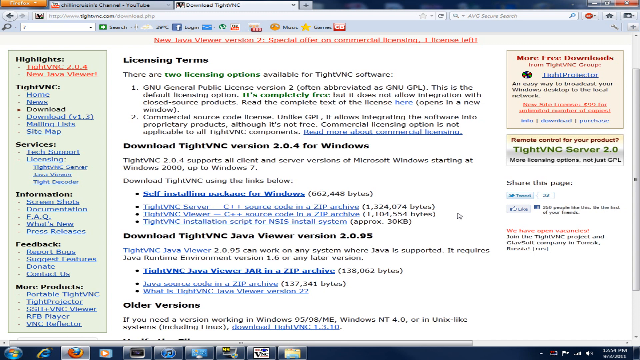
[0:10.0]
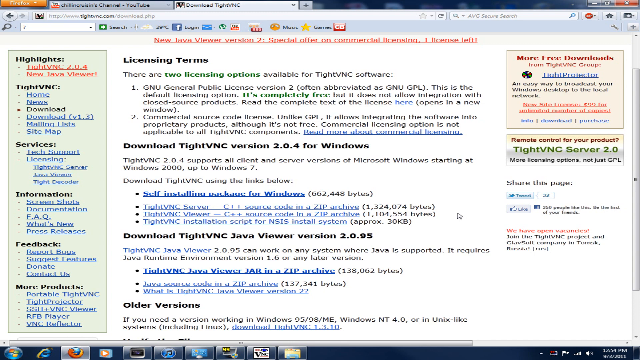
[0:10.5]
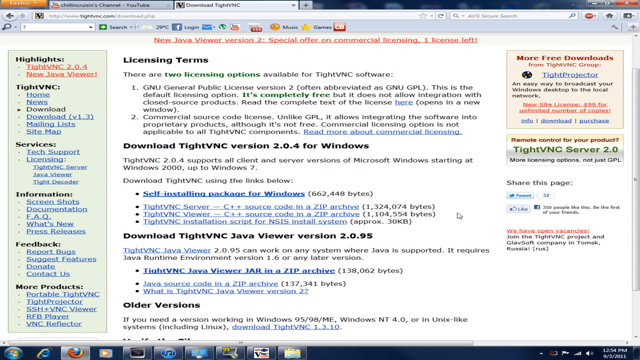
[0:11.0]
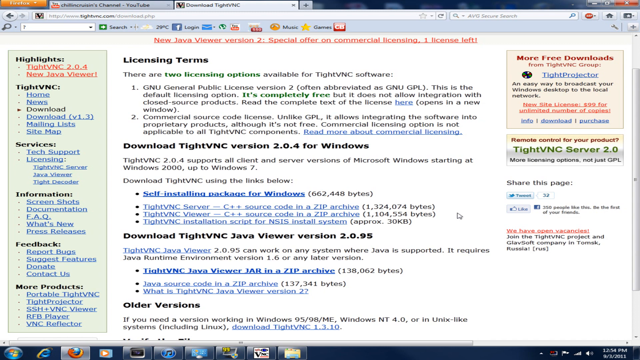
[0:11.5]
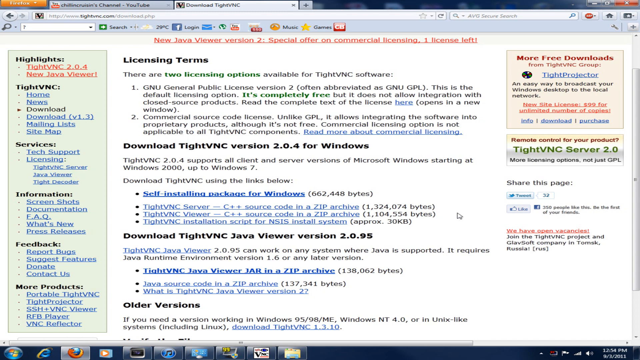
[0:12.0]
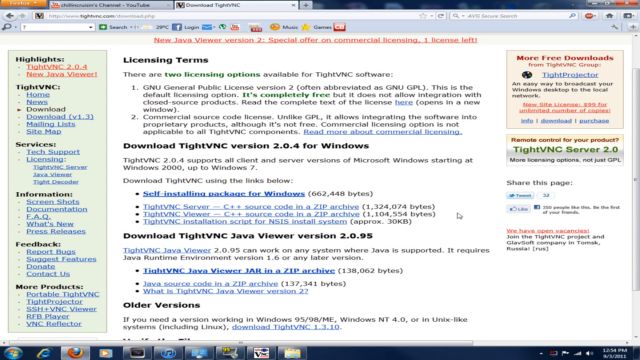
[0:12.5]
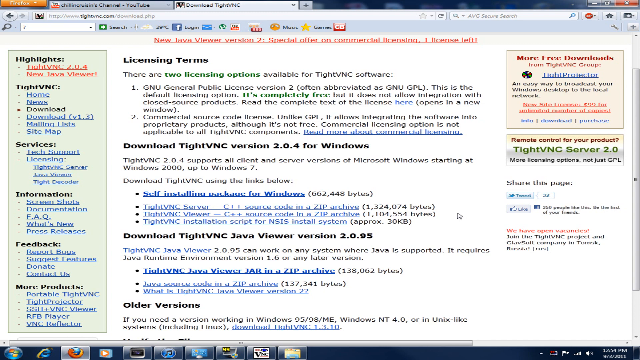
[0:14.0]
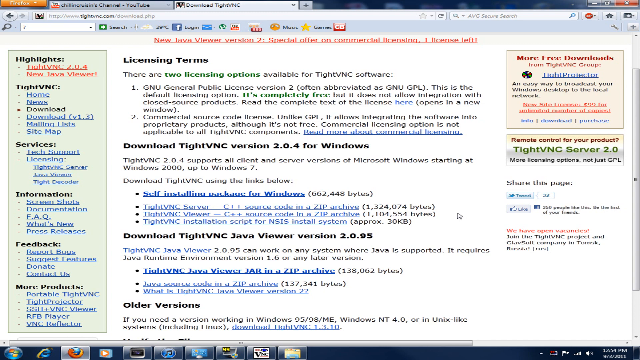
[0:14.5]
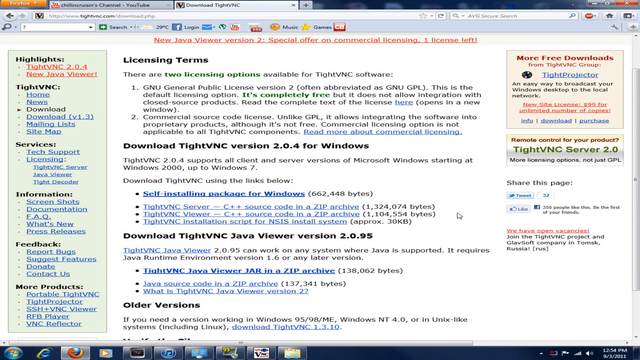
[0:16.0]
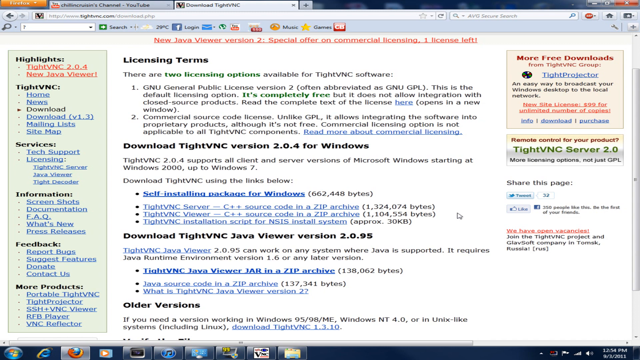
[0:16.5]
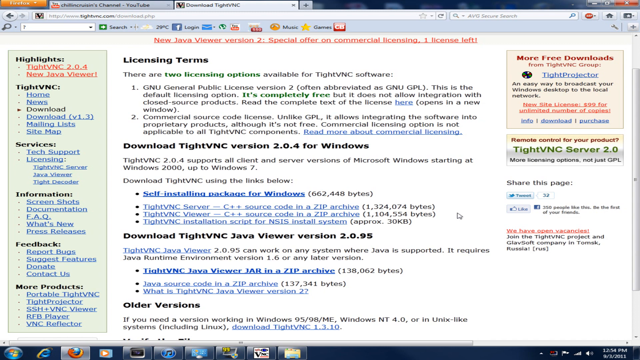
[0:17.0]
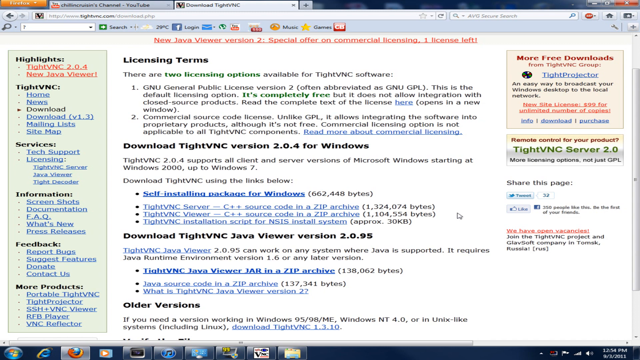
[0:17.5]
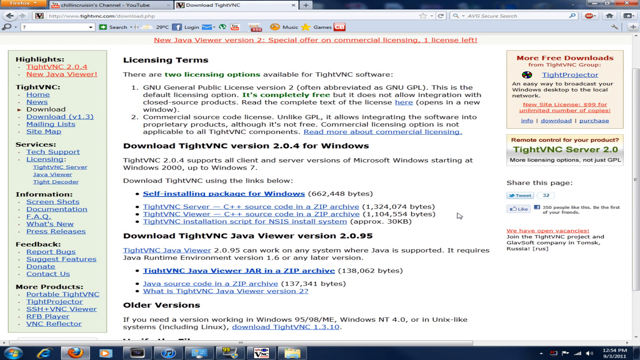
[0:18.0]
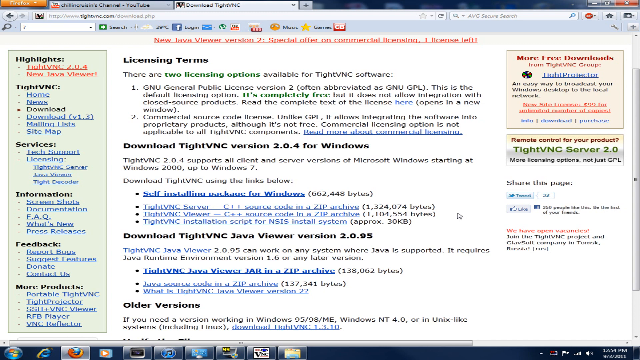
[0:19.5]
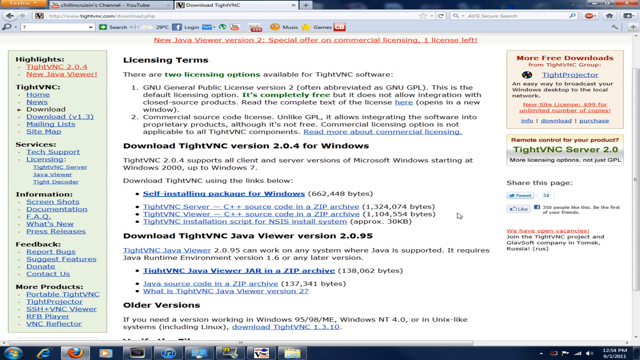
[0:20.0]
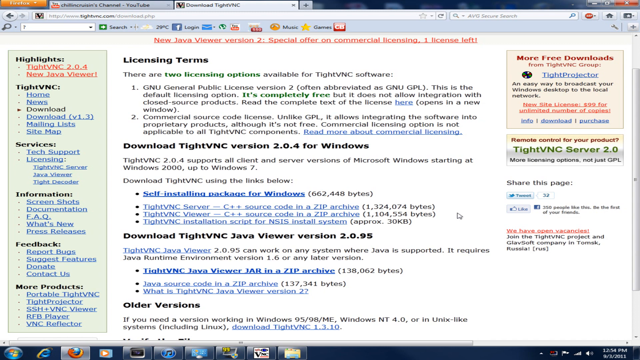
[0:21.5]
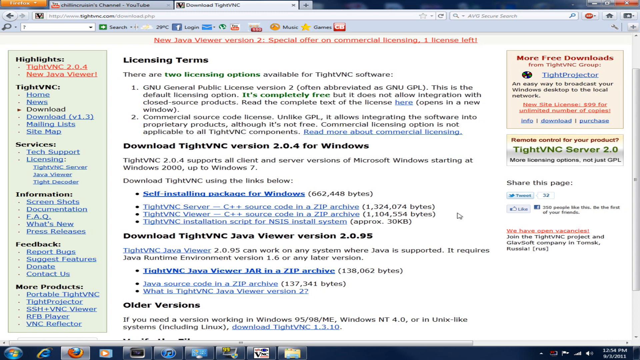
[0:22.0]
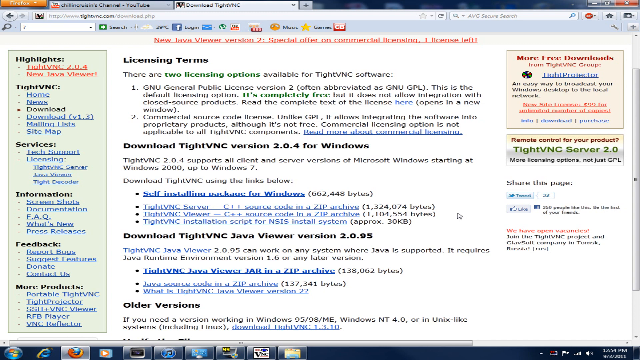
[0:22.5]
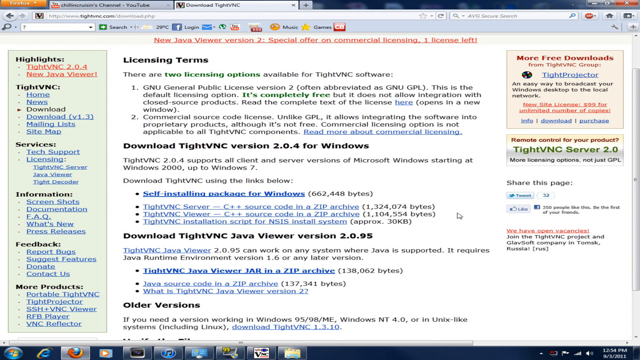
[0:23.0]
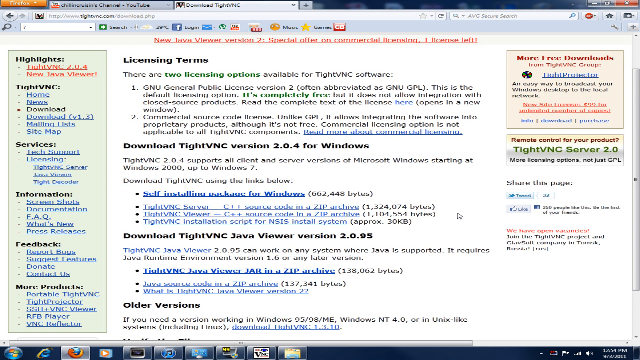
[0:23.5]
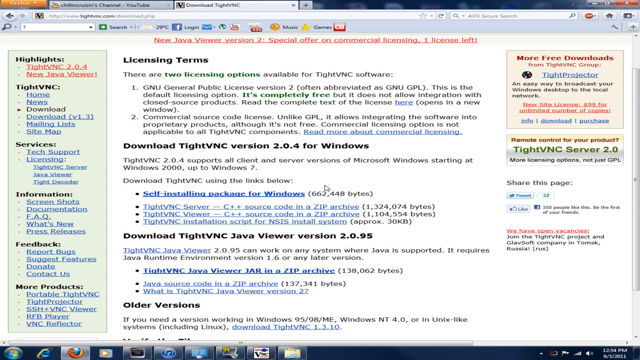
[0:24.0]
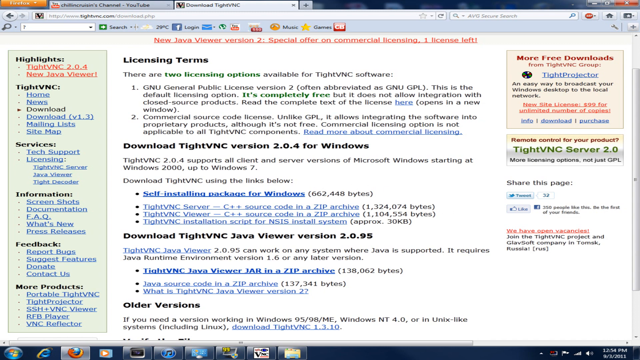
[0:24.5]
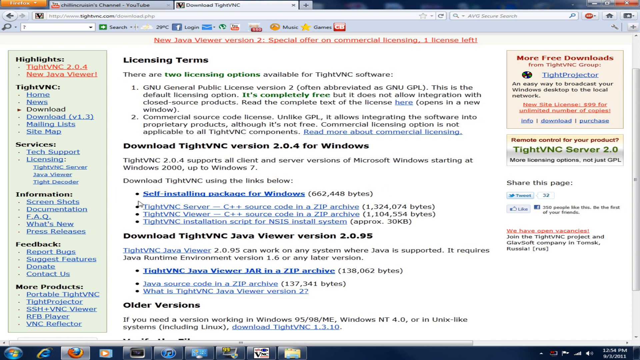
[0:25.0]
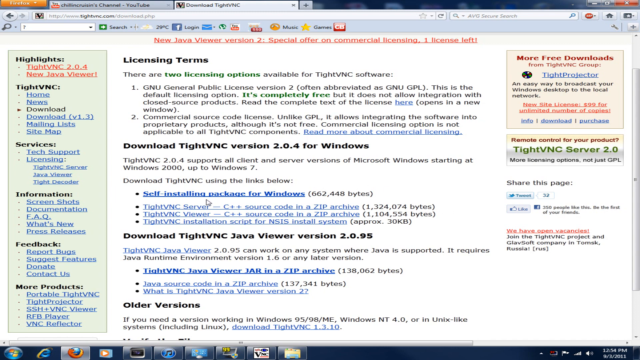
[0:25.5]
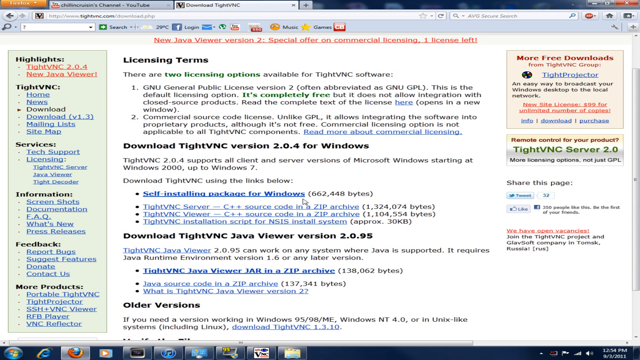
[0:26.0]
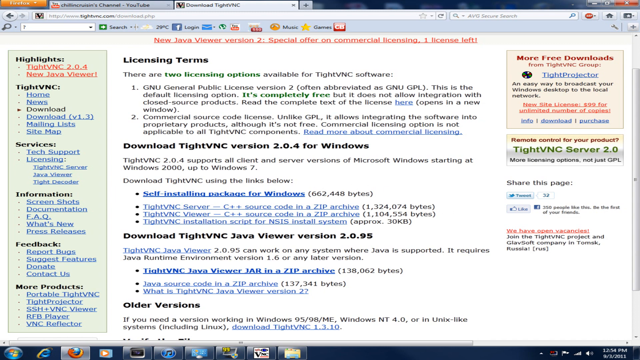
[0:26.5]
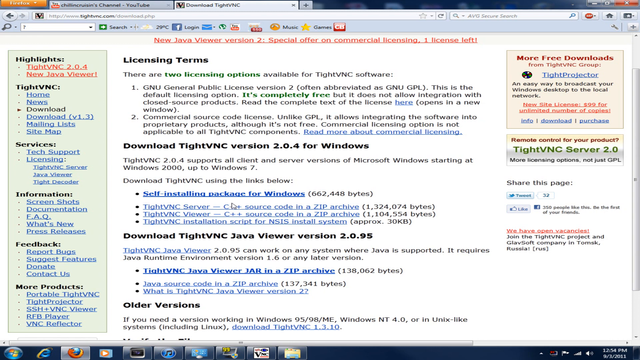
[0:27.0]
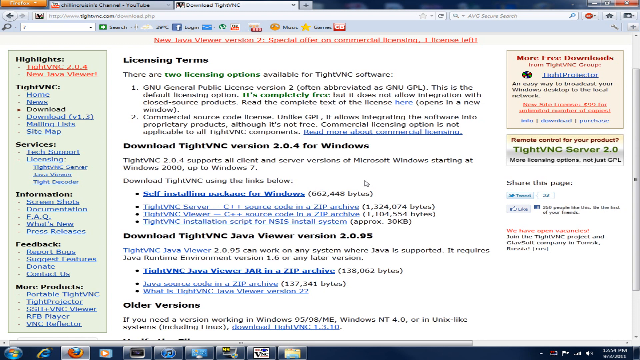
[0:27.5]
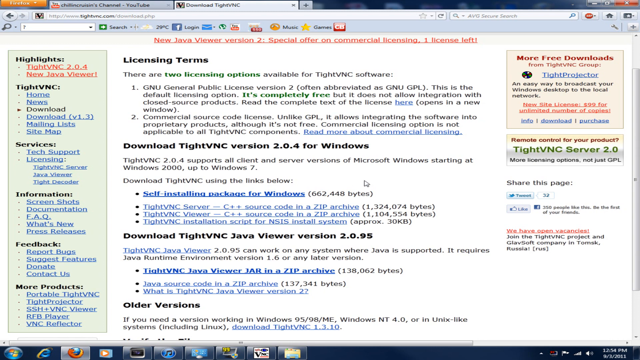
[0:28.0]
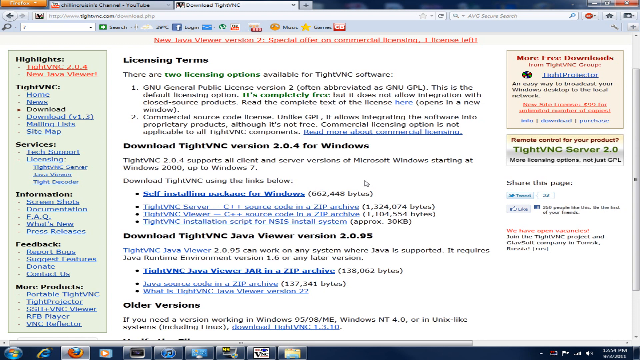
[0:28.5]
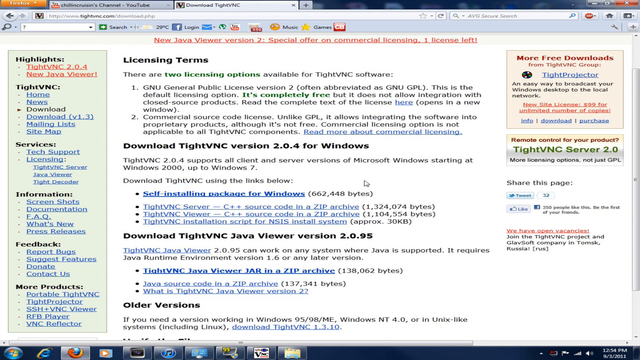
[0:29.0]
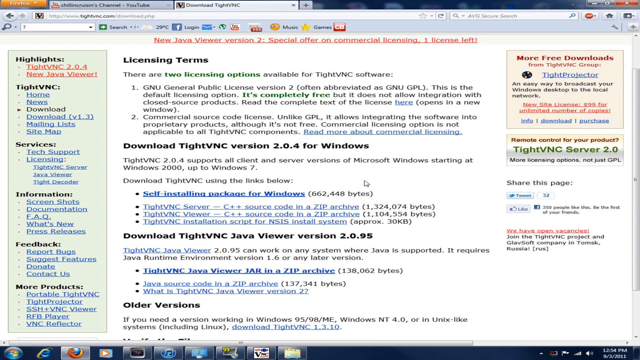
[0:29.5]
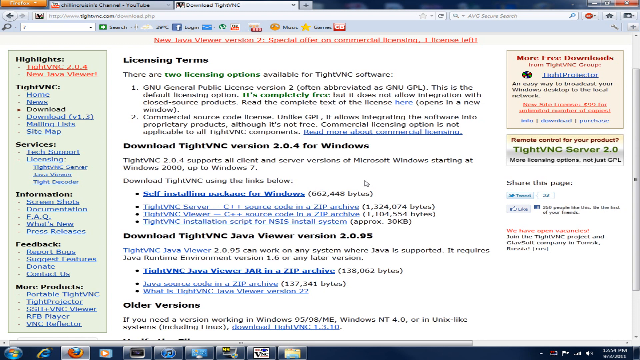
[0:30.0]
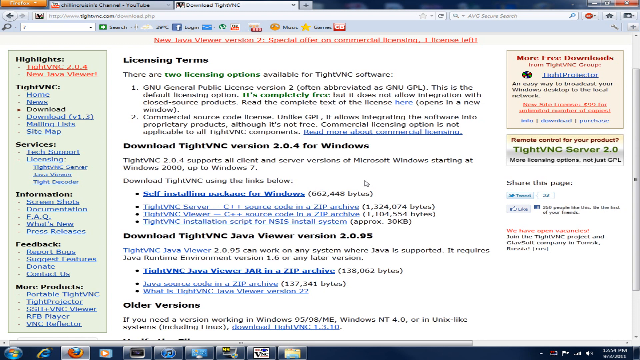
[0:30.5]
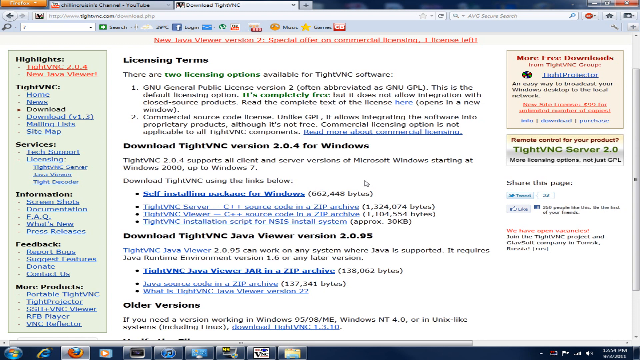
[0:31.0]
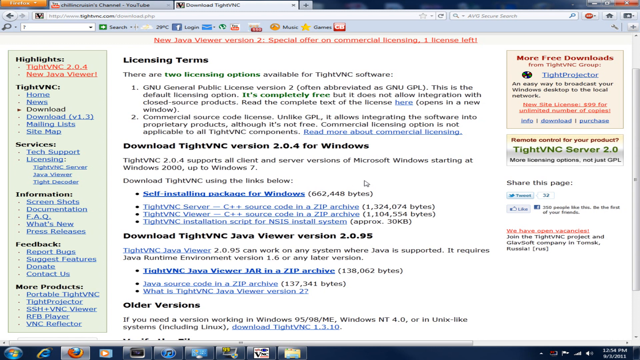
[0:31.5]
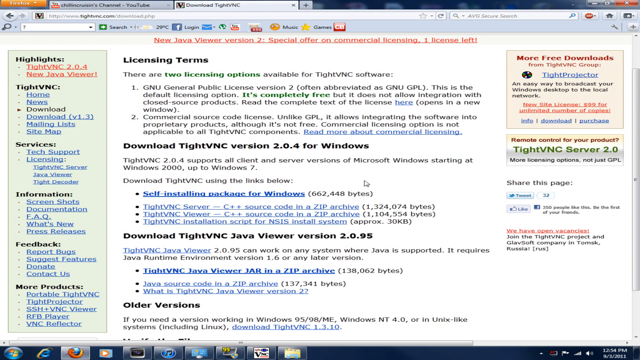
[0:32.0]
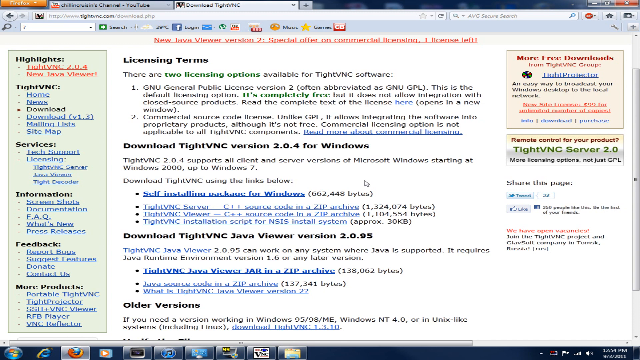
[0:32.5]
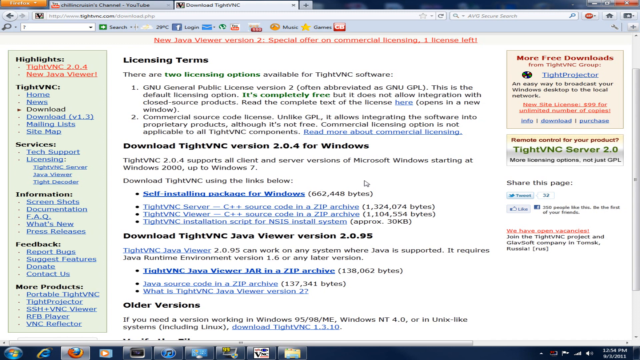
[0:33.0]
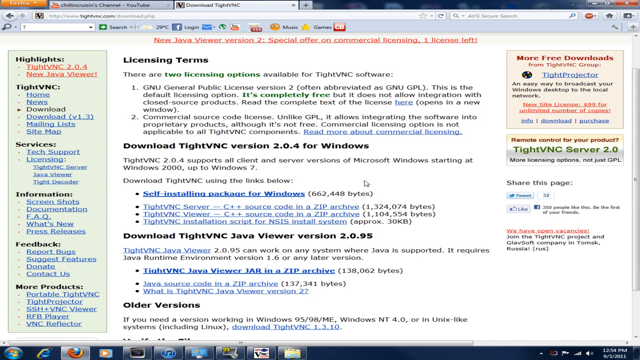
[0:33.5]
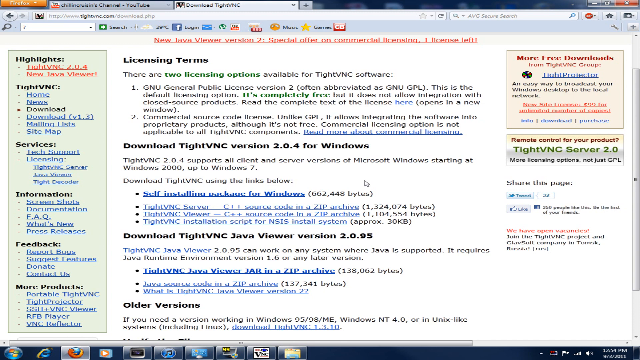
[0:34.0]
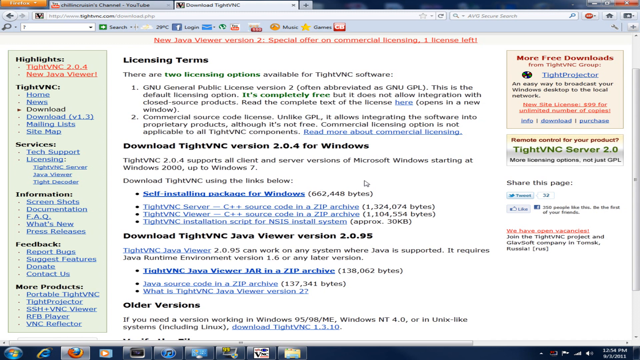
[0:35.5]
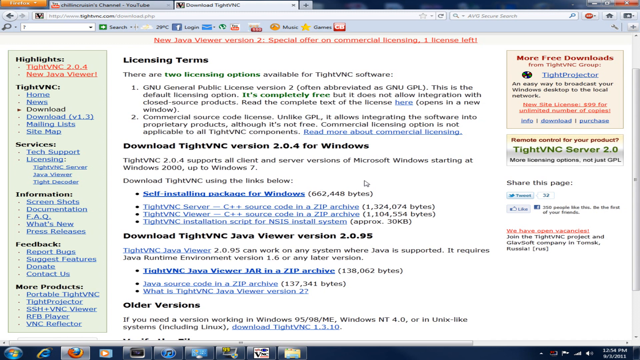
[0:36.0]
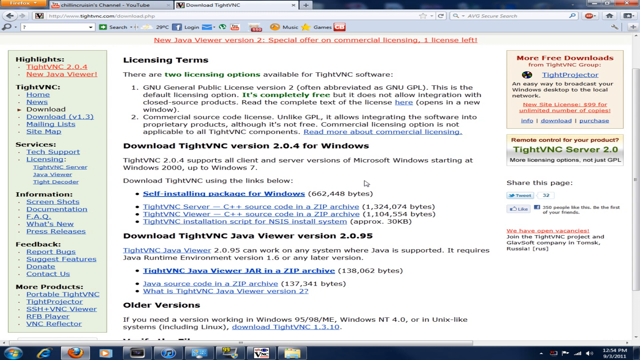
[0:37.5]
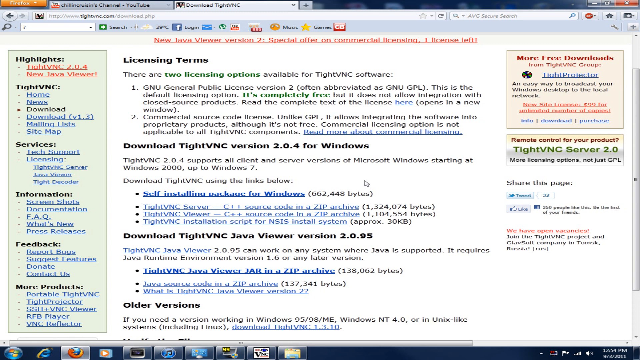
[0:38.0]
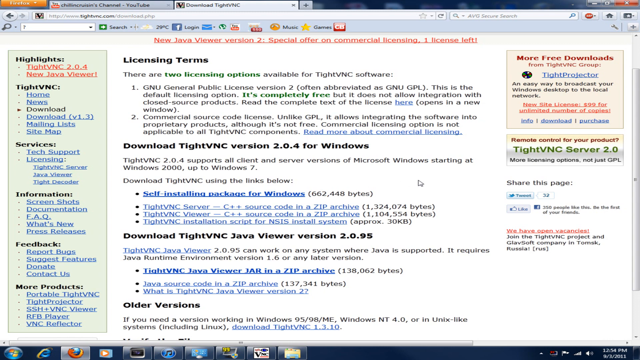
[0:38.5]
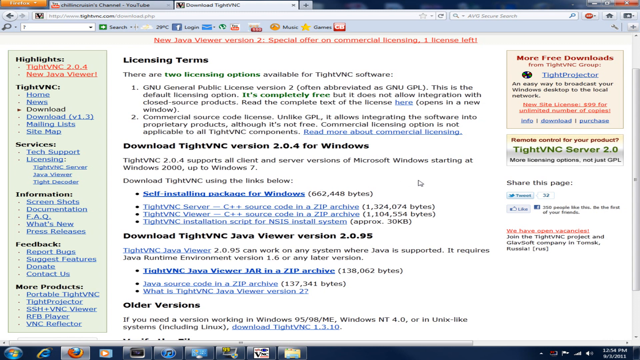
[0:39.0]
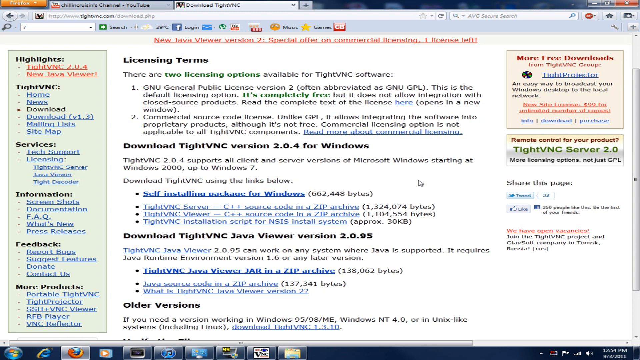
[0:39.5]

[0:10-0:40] A website page is shown. At the very top, in red, it says "new java viewer version 2 special offer on commercial licensing one license left". Then, in bold black, it reads "licensing terms", followed by text about the two licensing options. Underneath it says "download type BNC version 2.0.4 for Windows", then "download type BNC Java viewer version 2.0.95" with text about that download. Farther down the screen it says "older versions" and "if you need a version working on Windows 95 98" and "Windows NT 4.0". Someone waves the mouse pointer over a line on the screen that says "download TiteVNC using the links below". On the left side of the screen there are different options: "highlights", "type VNC", "services", "information", "feedback" and "more products".